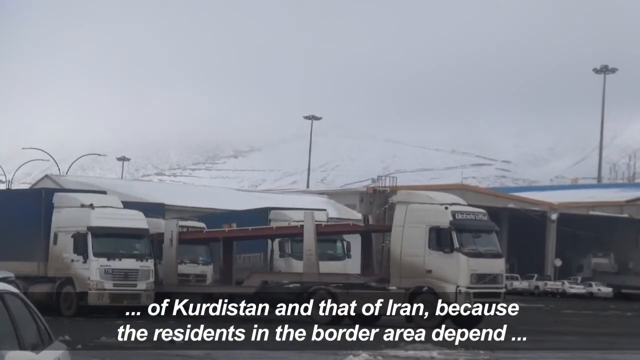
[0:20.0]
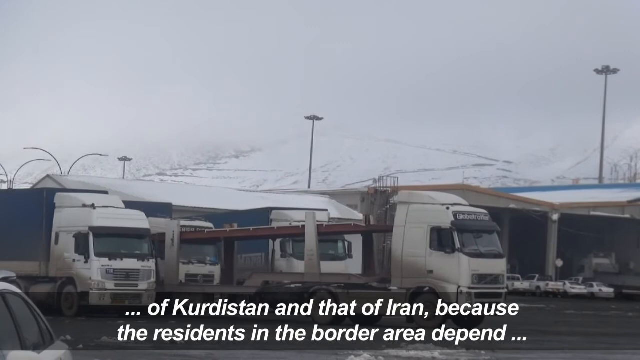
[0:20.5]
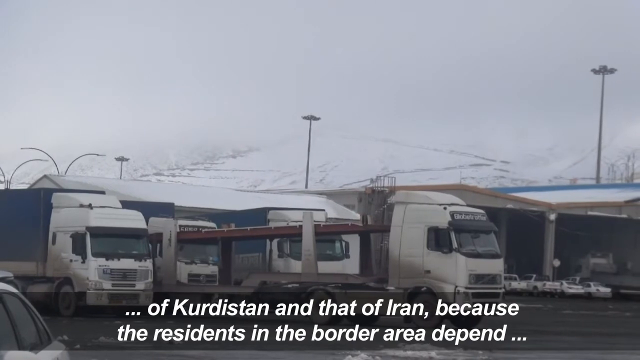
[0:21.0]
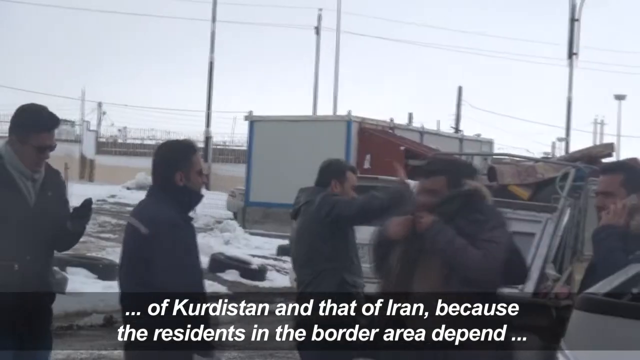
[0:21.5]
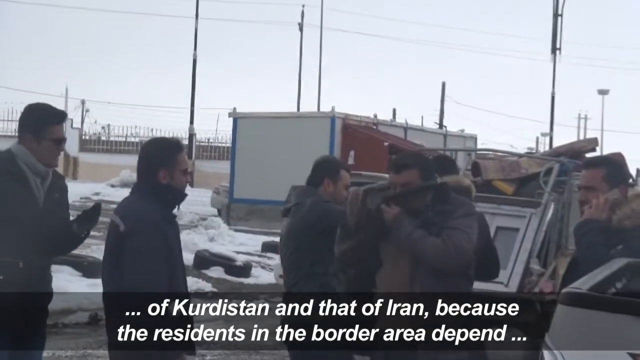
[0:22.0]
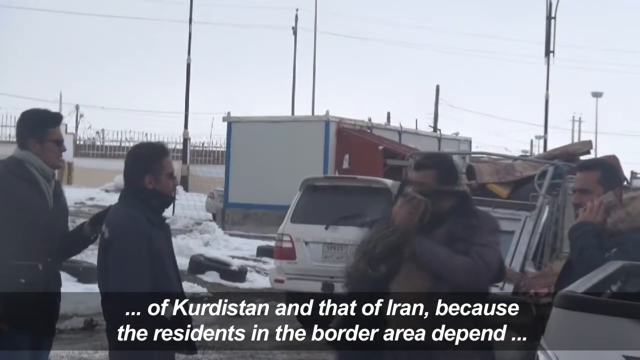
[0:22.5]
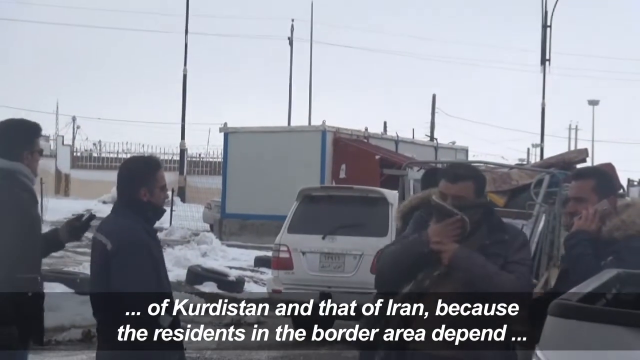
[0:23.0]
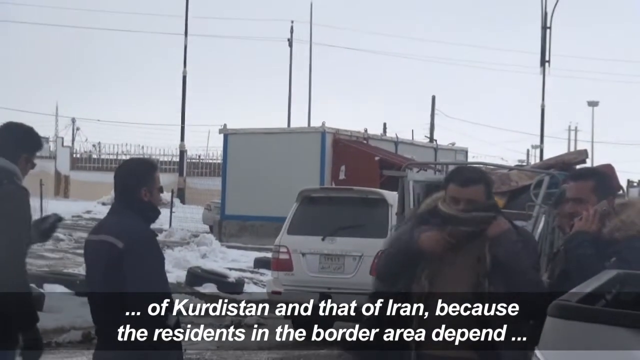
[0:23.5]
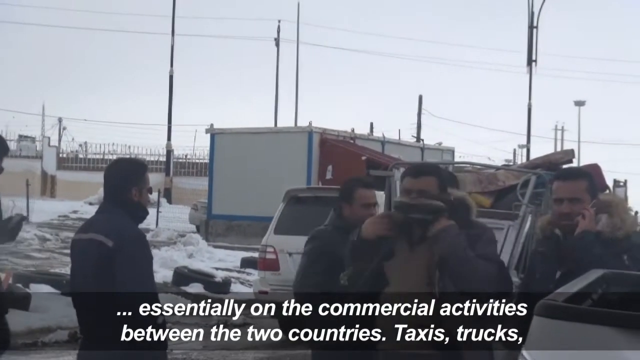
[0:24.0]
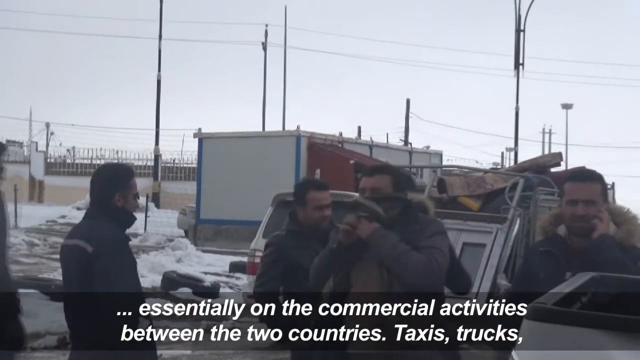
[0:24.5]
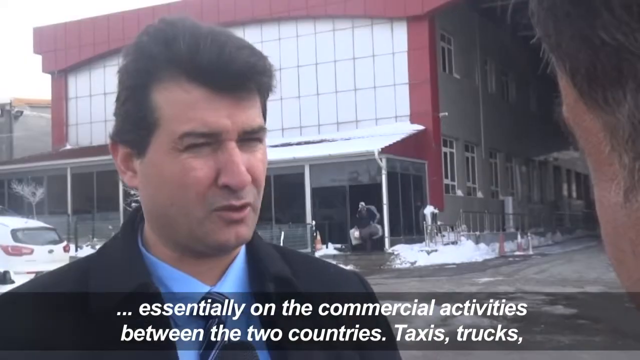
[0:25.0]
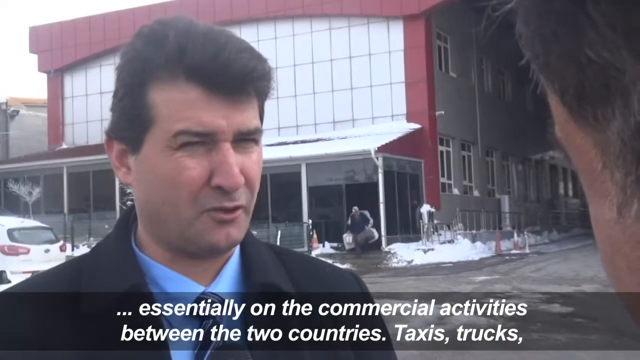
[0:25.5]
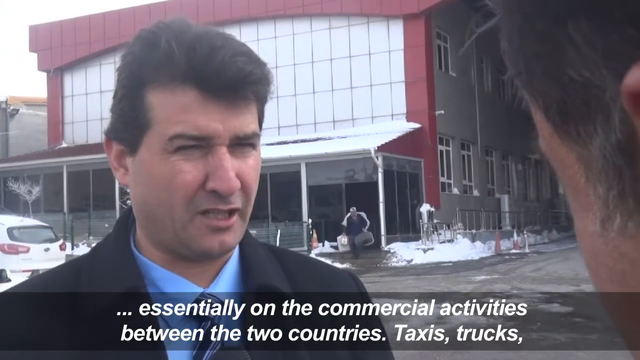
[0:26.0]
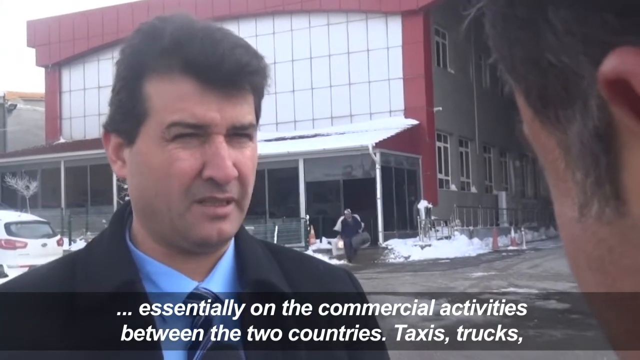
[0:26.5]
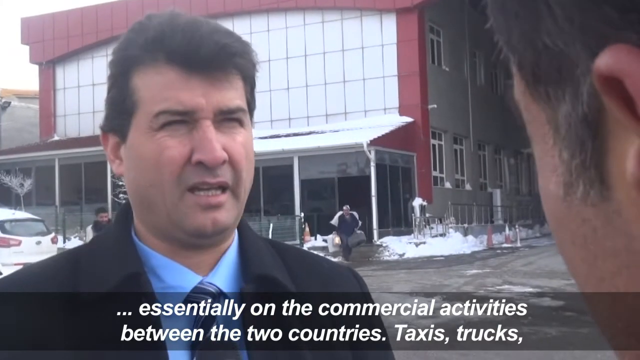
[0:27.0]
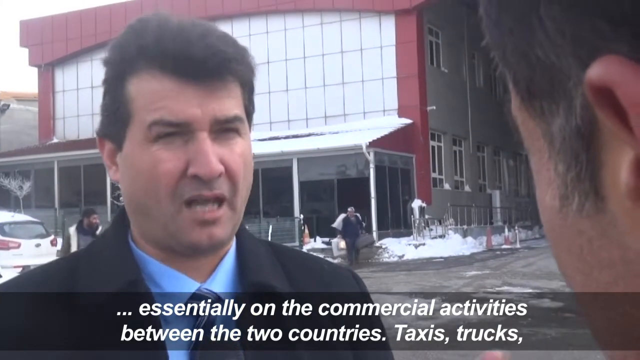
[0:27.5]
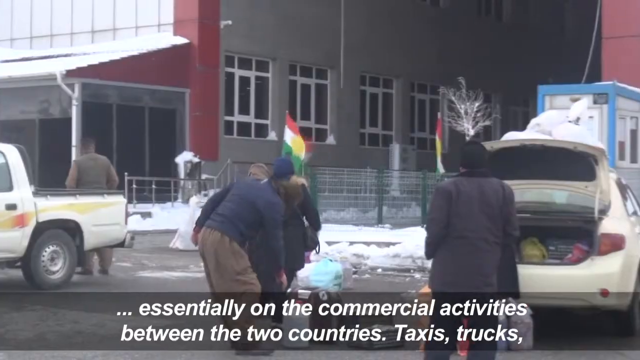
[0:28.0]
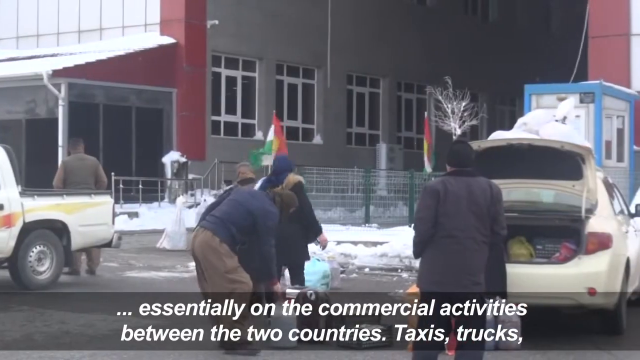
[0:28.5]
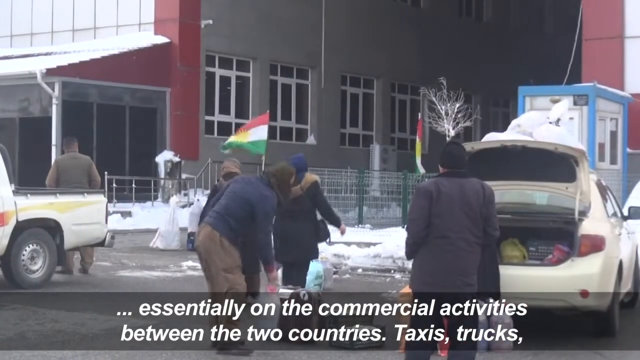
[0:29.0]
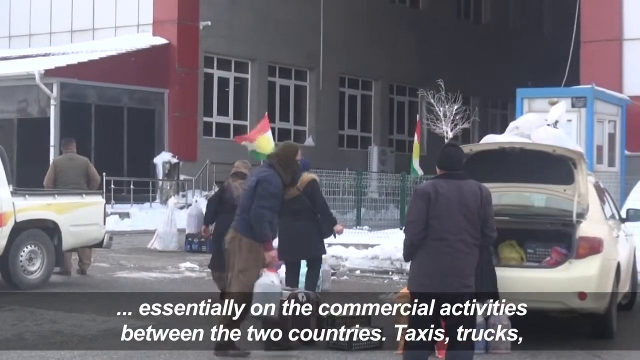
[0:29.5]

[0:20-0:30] The border crossing point between Iran and Iraq continues to be shown. White cabover lorries with blue trailers behind them are queuing up and parked. It is a wintry-looking scene, with snow on the hilltops and mountains. The lower third of the screen shows the interviewee's information and text of what he is saying, about the importance for the region's commercial activities of cars, trucks and taxis being able to cross the border. What appear to be taxi drivers stand outside their cars, wrapped up in coats, putting scarves on and talking to each other. There is something of a queue of people waiting to cross at the border, speaking on their phones, carrying bags, and unloading and loading vehicles for inspection.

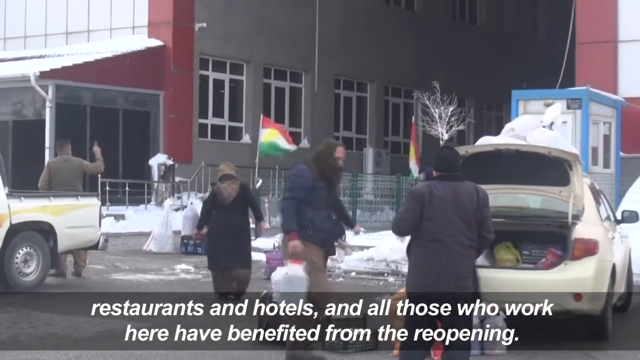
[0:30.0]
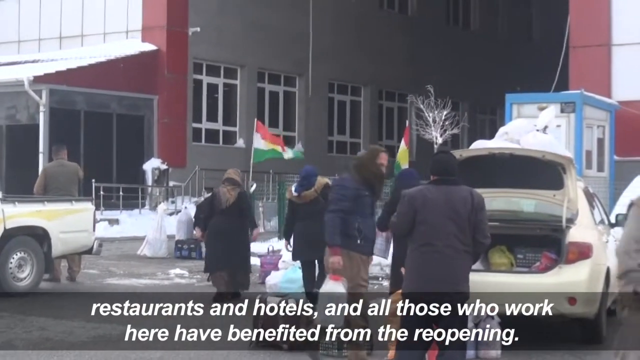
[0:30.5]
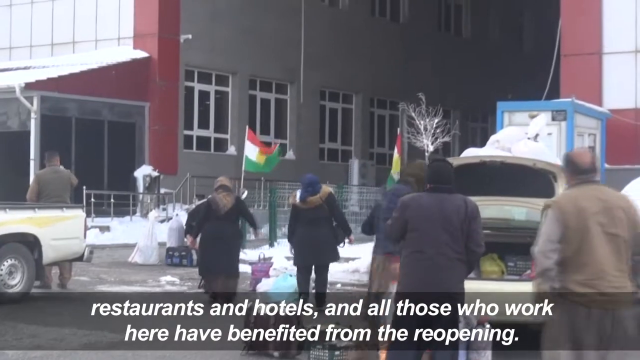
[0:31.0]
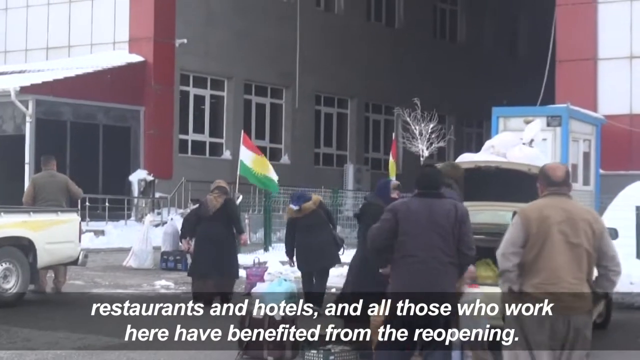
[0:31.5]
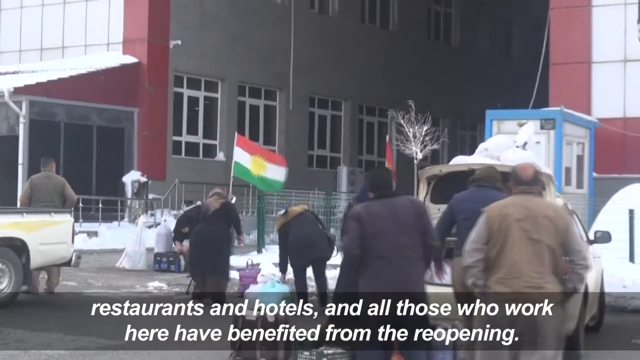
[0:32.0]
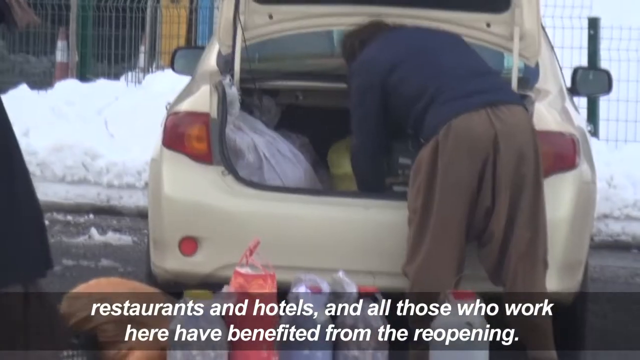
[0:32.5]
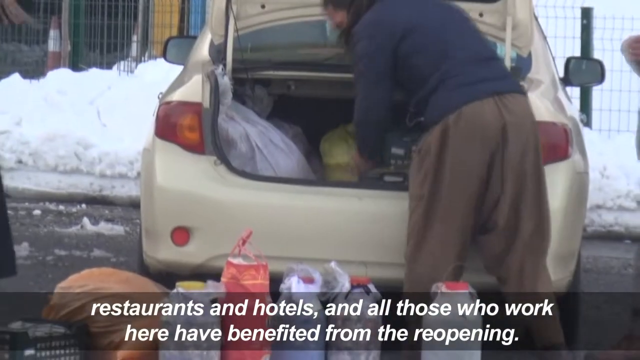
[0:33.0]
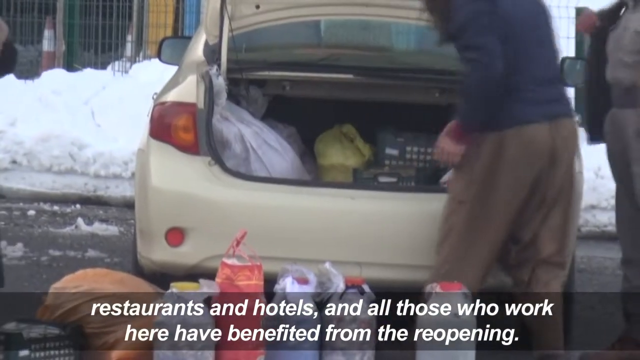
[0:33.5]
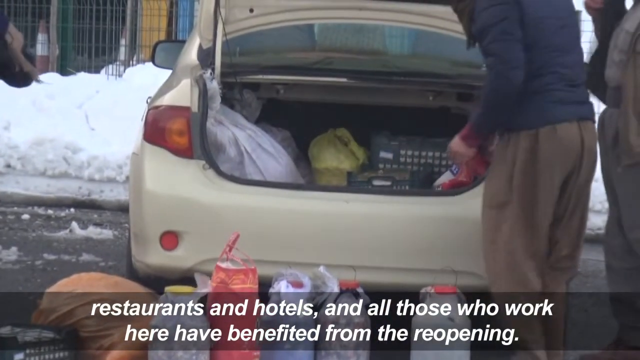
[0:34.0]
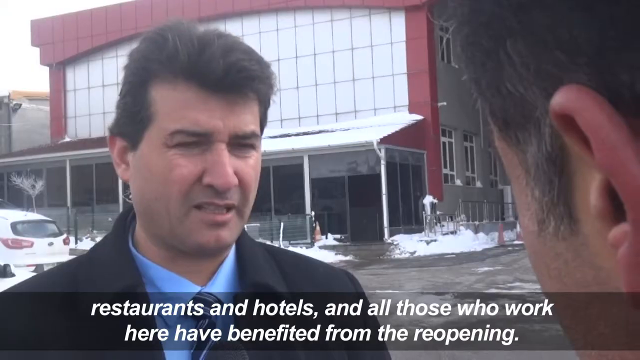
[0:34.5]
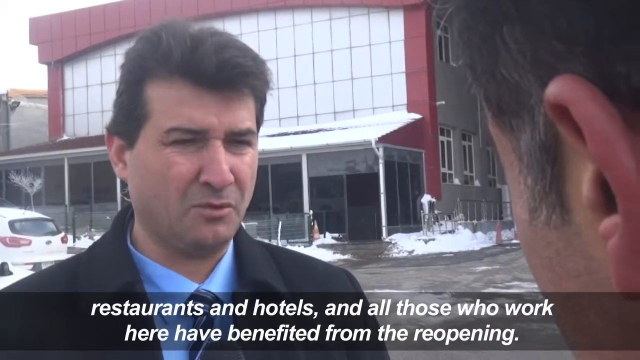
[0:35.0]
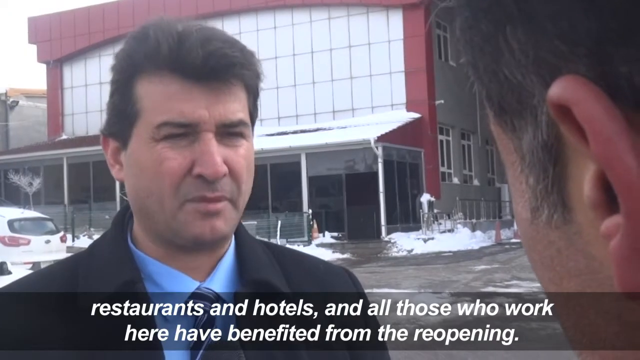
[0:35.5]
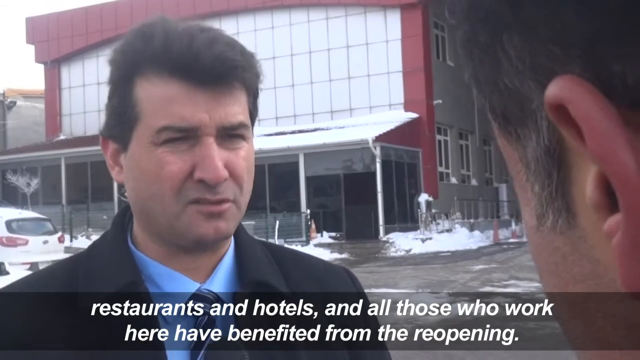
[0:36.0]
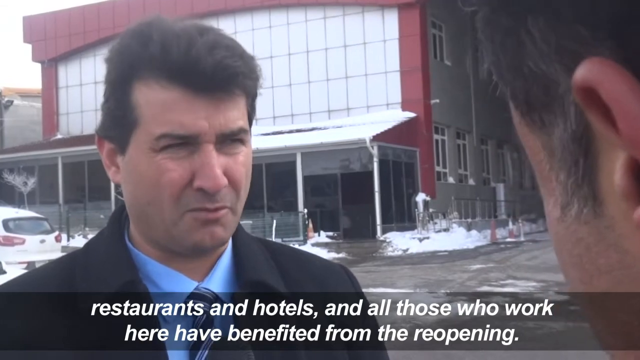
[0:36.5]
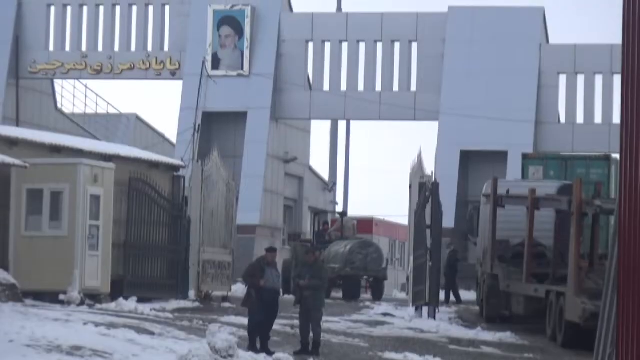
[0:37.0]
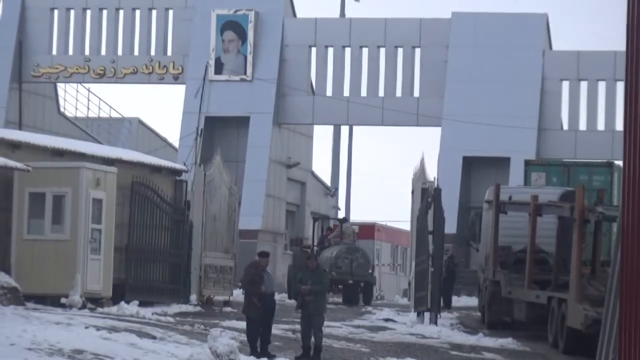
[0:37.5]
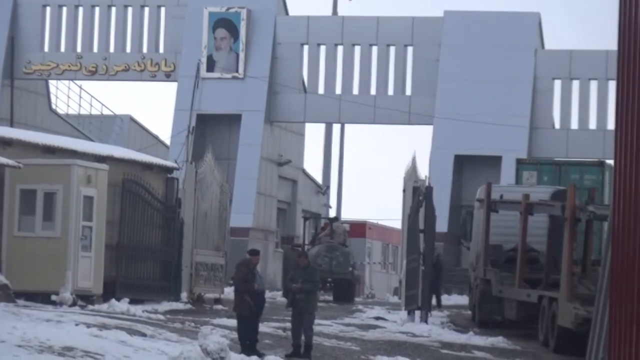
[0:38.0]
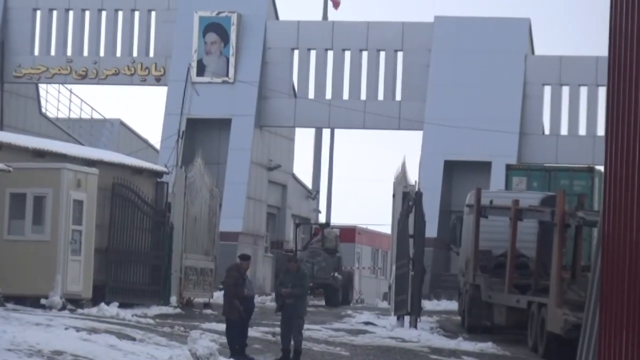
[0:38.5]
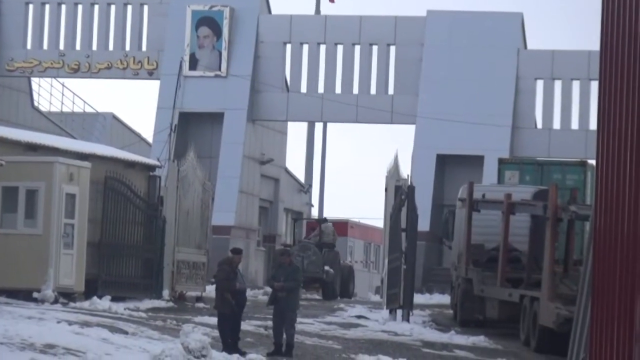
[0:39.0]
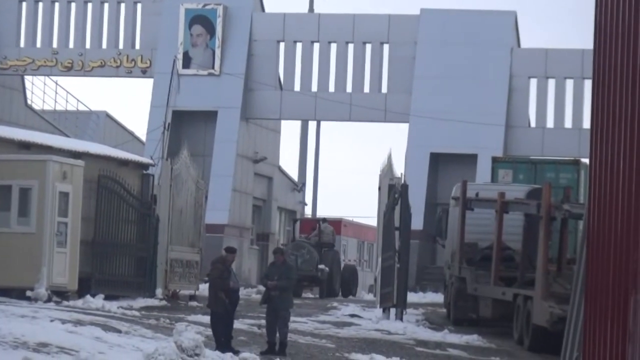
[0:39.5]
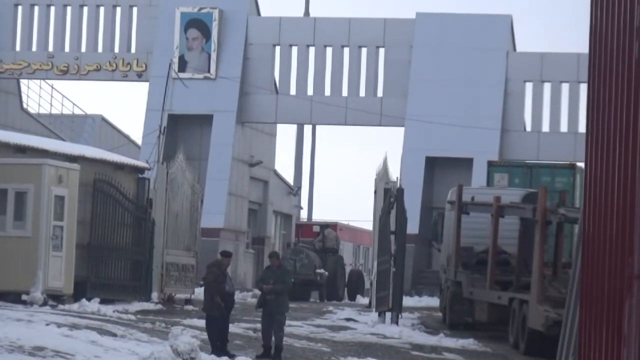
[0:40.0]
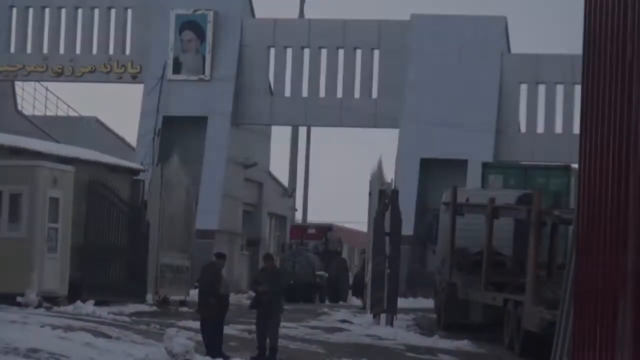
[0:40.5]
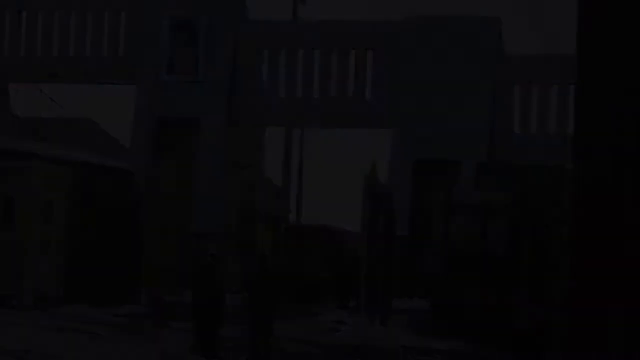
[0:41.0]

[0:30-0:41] In this newscast about the border between Iran and Iraq, an Iranian official speaks to a reporter off-camera, intercut with b-roll footage of the border point between the two countries. The flags of Iran and Iraq appear together with border buildings, customs checkpoints, gates and guards, and people unloading and loading their cars with bags, containers and food. It is a wintertime scene, with piled-up snow and trees without leaves. There is a white pickup truck and a white car, and some old women wrapped up in thick winter jackets walk along. A tractor pulling a small fluids container then crosses through the border gate. On the concrete wall around the border gate is a portrait of the Iranian ayatollah looking down over the people as they leave or enter the country.